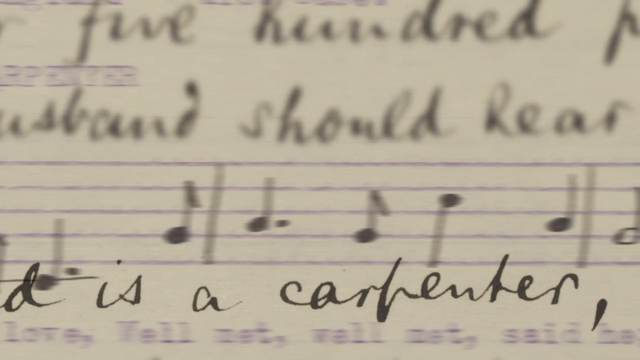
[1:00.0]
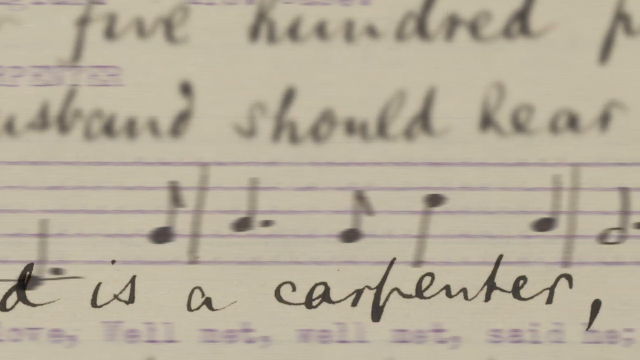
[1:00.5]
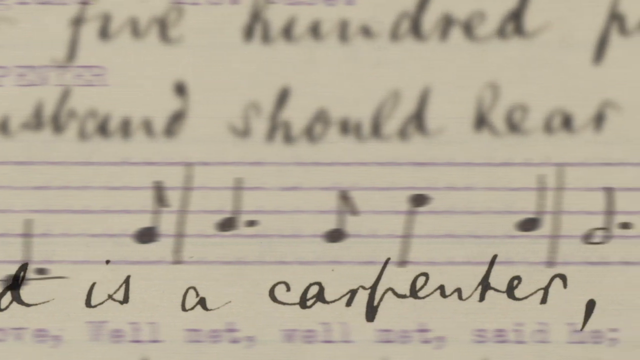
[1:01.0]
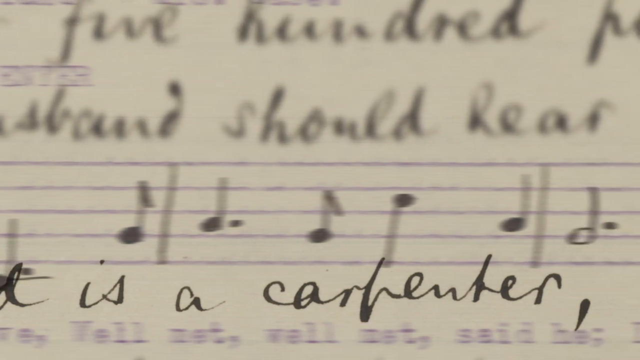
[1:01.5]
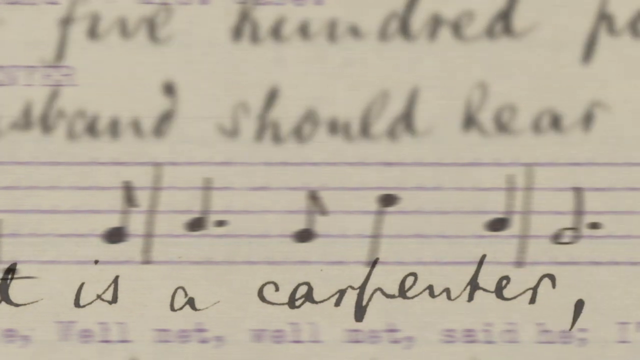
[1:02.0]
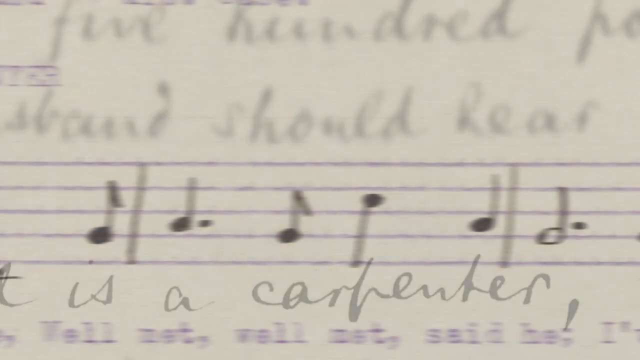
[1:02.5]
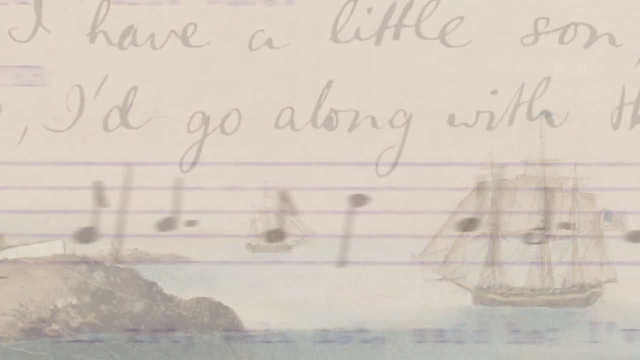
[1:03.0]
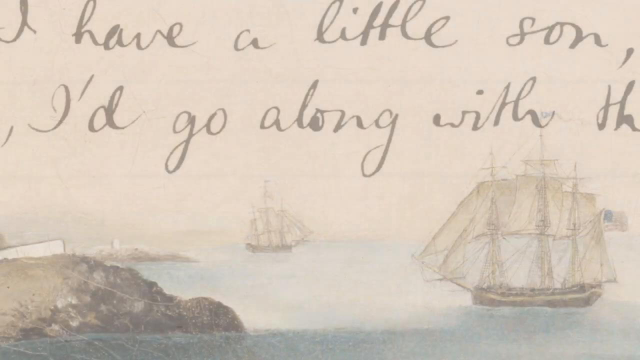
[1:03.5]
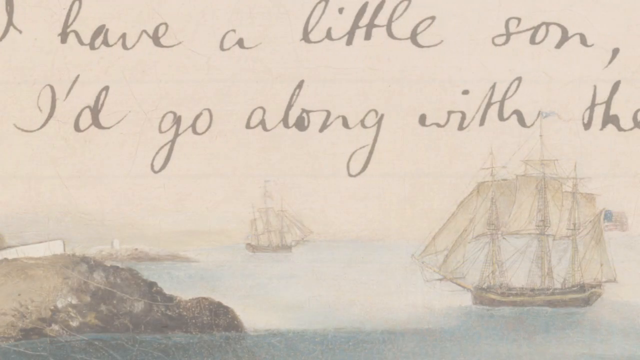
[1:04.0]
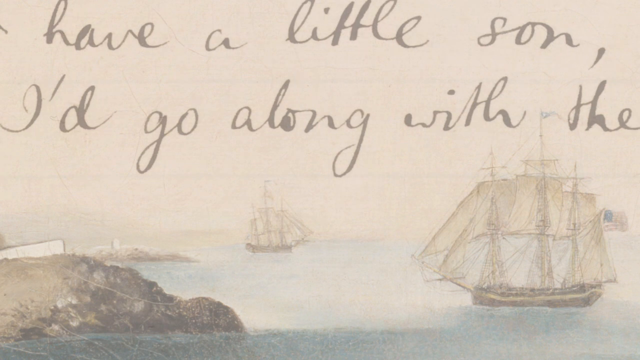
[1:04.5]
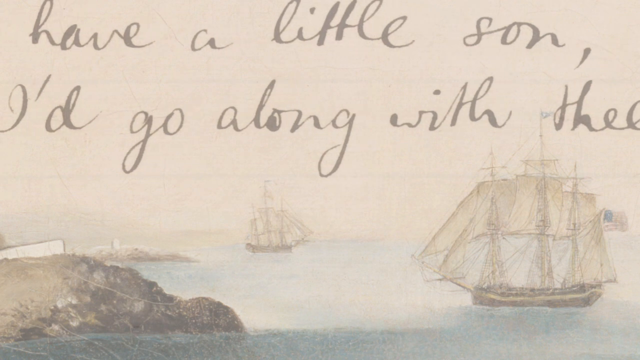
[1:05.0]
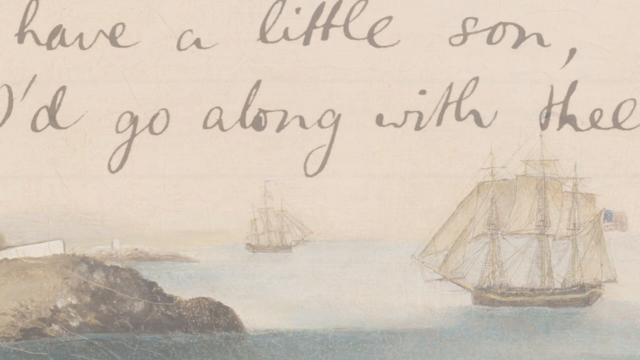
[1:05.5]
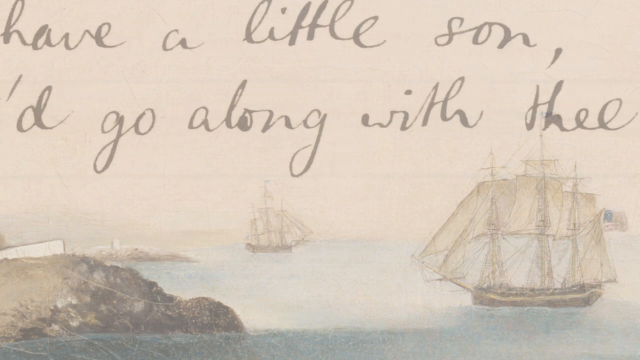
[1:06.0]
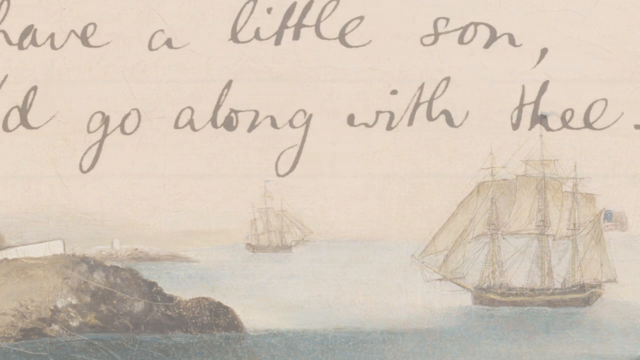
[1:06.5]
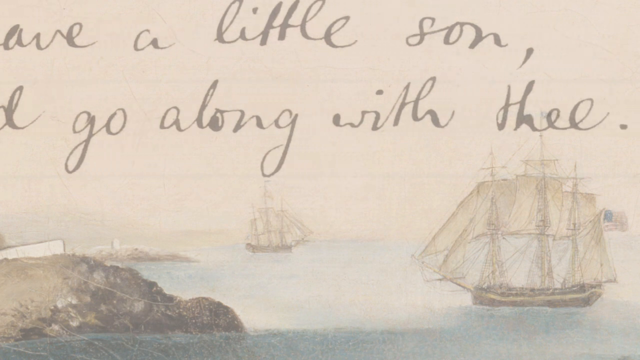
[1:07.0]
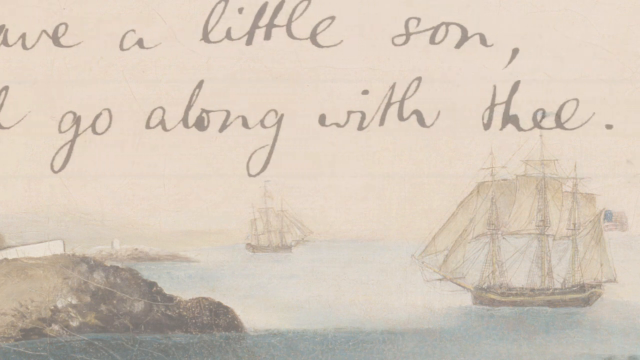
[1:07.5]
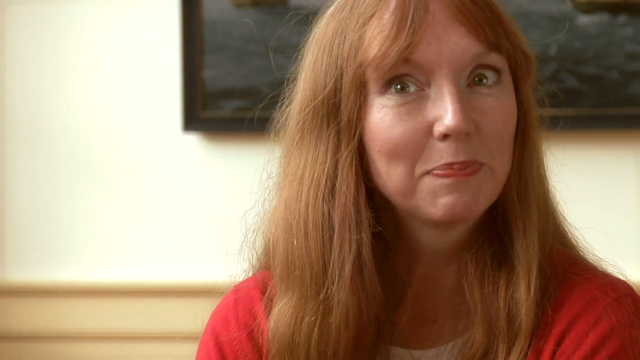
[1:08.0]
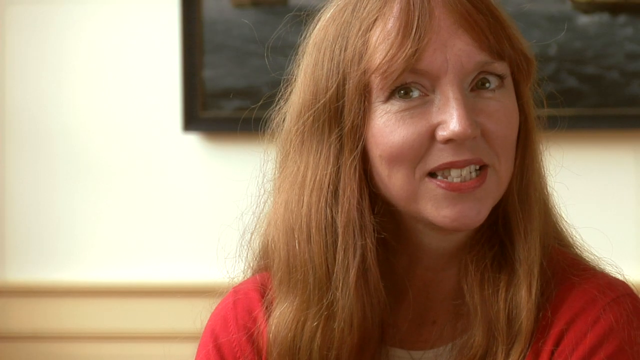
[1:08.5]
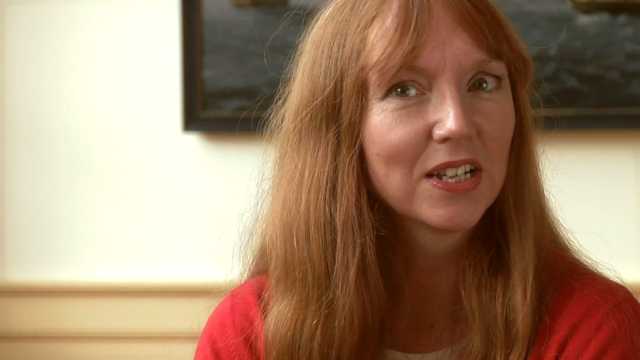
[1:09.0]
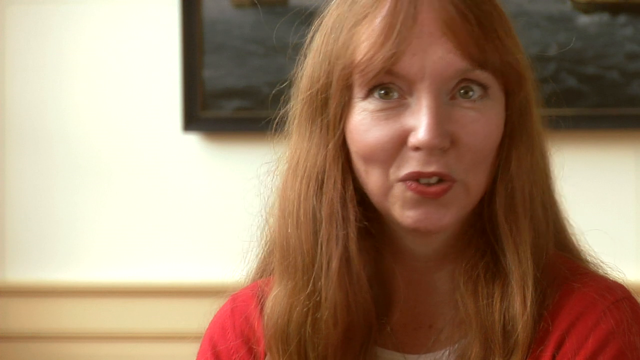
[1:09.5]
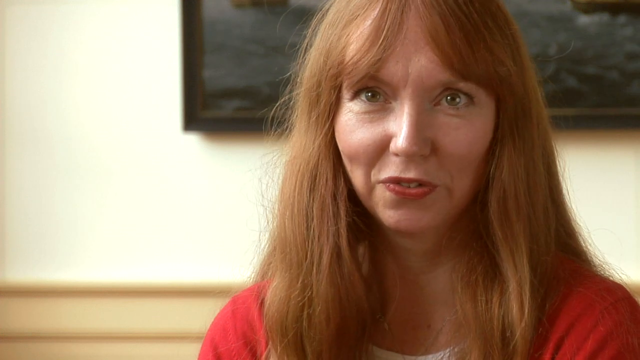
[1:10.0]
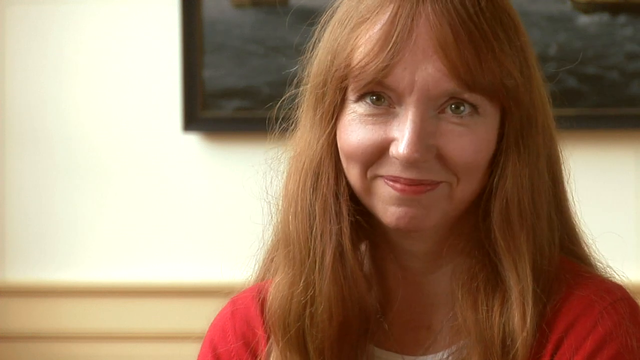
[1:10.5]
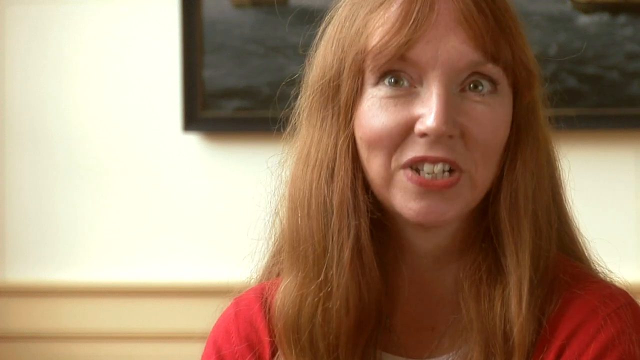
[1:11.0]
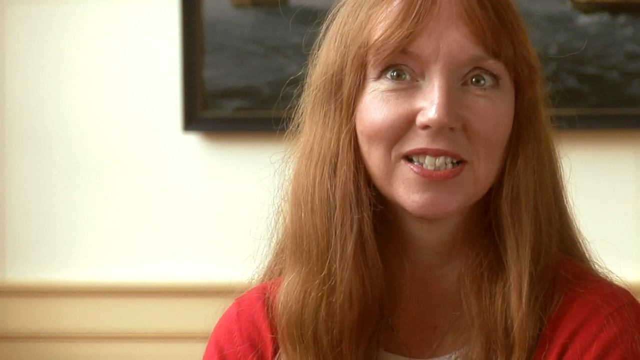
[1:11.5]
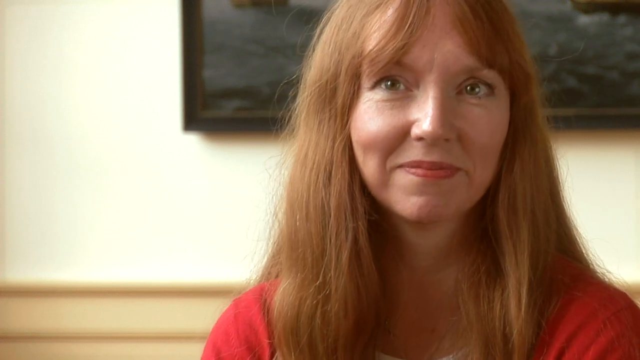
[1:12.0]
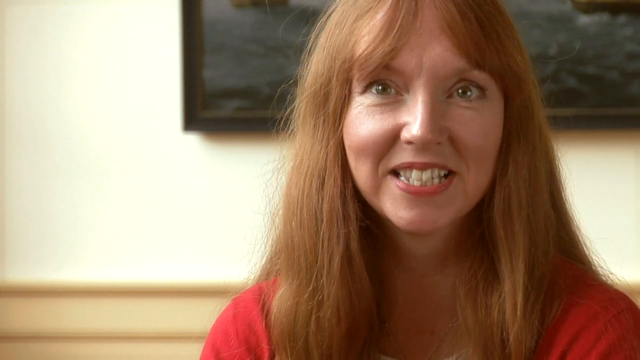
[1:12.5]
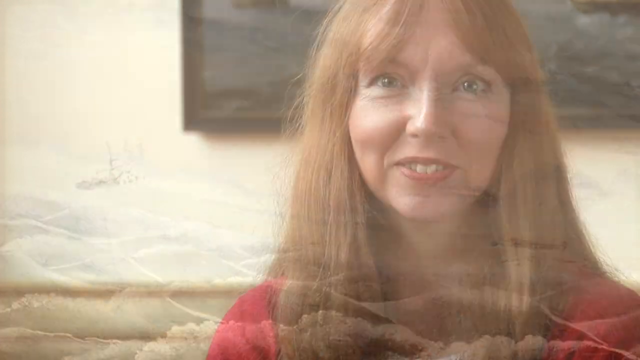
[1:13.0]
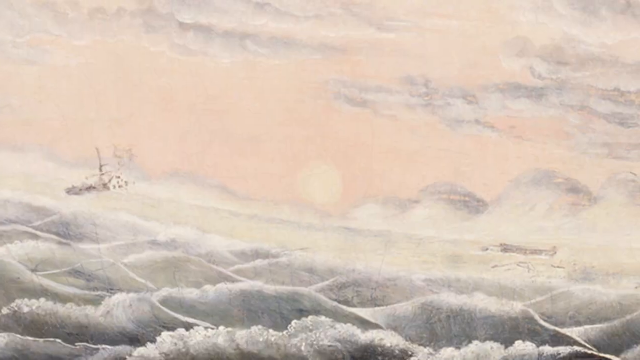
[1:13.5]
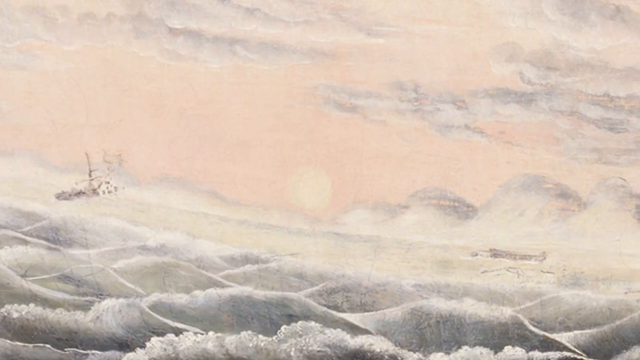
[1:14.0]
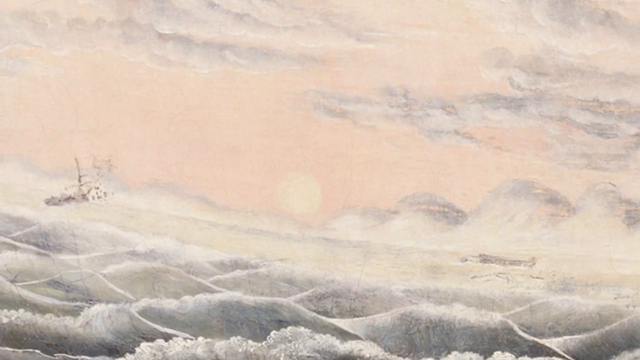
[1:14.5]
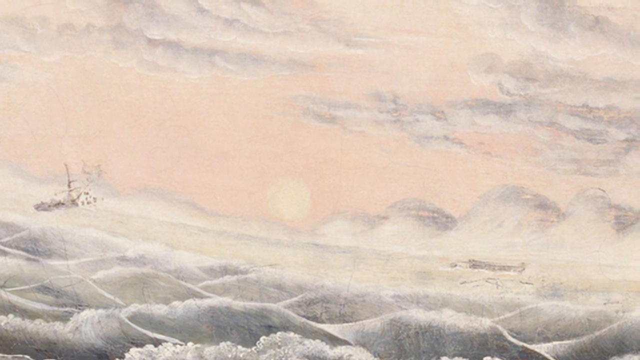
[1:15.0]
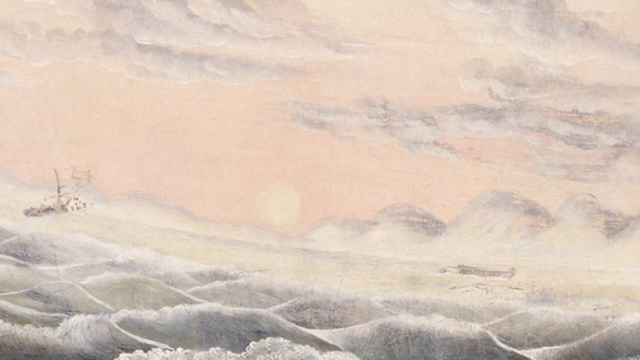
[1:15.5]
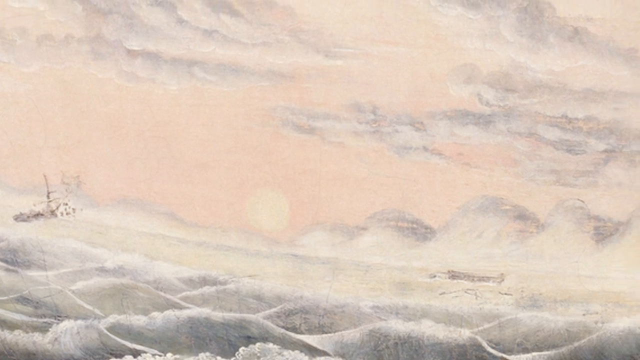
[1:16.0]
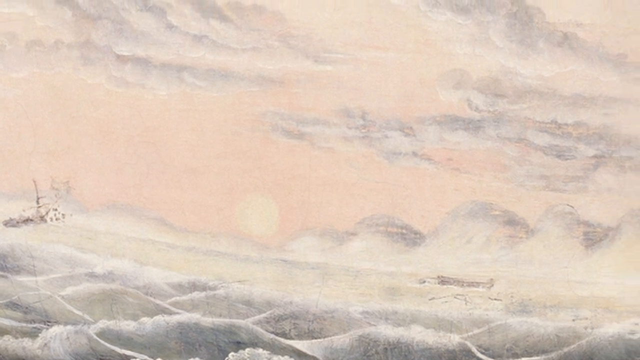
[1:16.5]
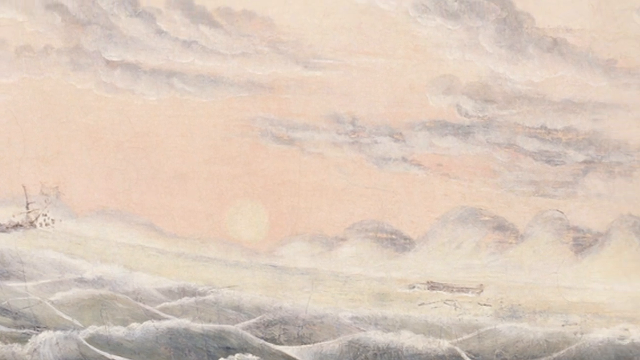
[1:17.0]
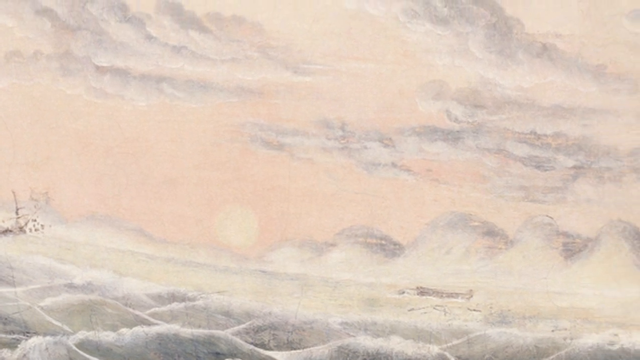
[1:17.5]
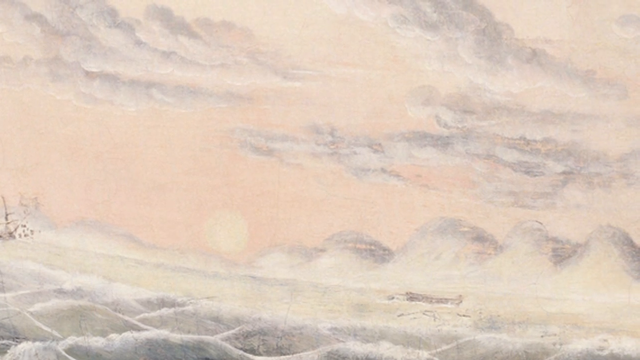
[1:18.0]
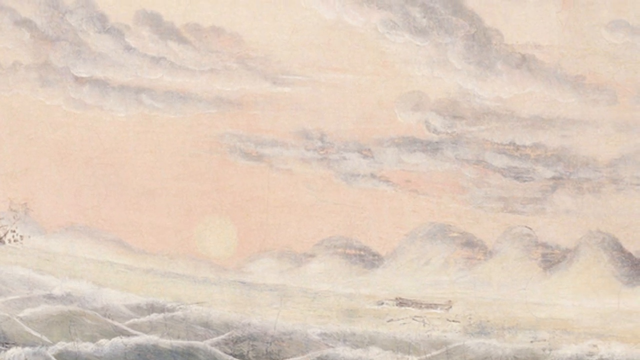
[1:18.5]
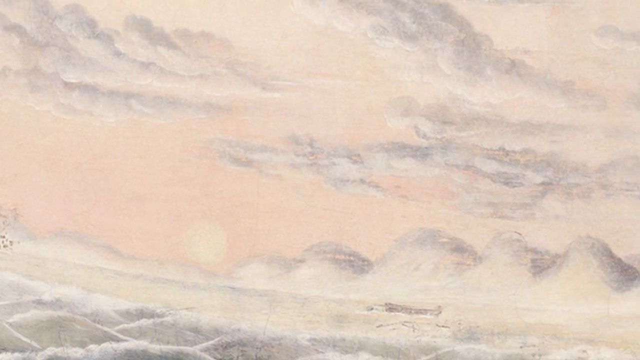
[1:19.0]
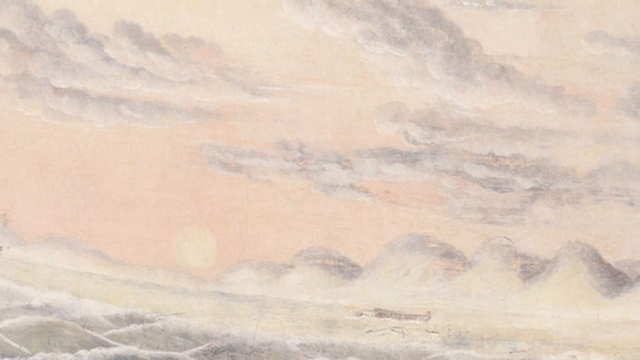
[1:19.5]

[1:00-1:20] Highlighted text in color at the bottom of the screen includes the word "carpenter," while the background is more blurred. "500" appears at the top, and something continues to move across the screen from right to left. The video cuts to the sailing ships in the background with text that includes "a little son" and "go along with." It then cuts back to the red-haired woman, who is very animated and expressive with her eyes, which are kind of wide. She looks to the left, moves her head back to the right, has a smirk on her face, and nods her head up and down a little. The video cuts back to the first picture, apparently of ships sailing on the water.